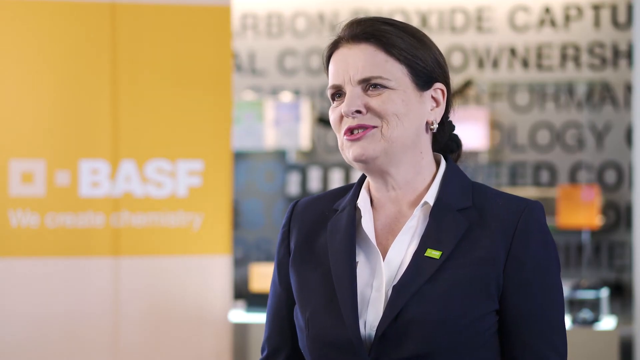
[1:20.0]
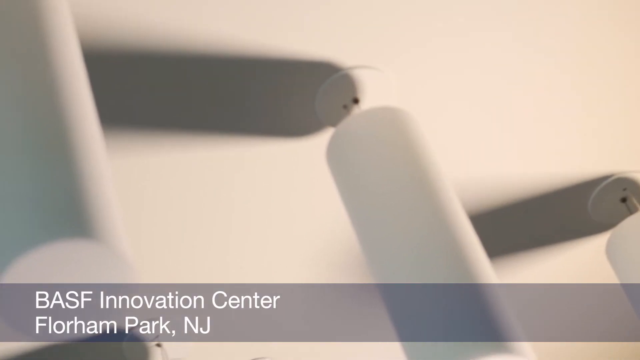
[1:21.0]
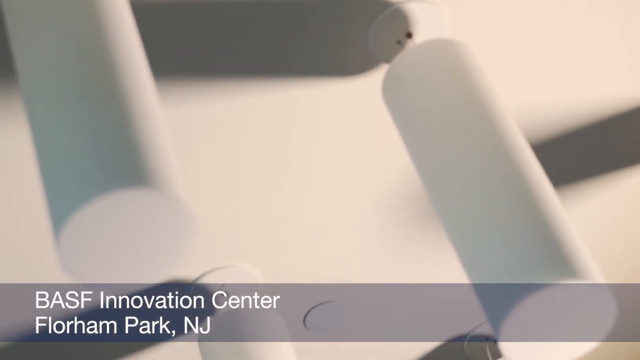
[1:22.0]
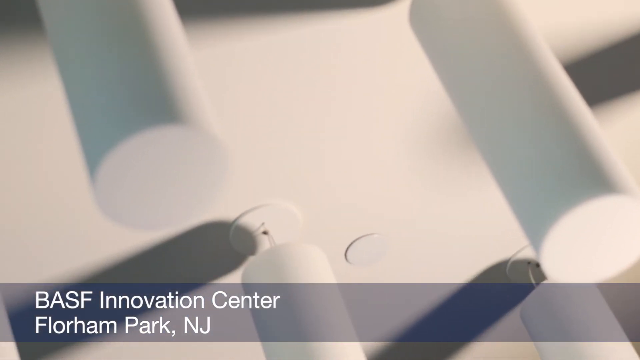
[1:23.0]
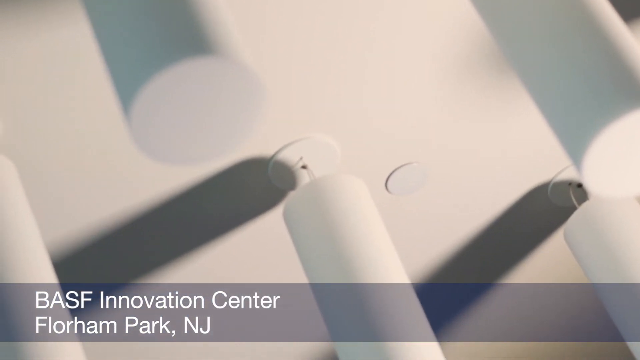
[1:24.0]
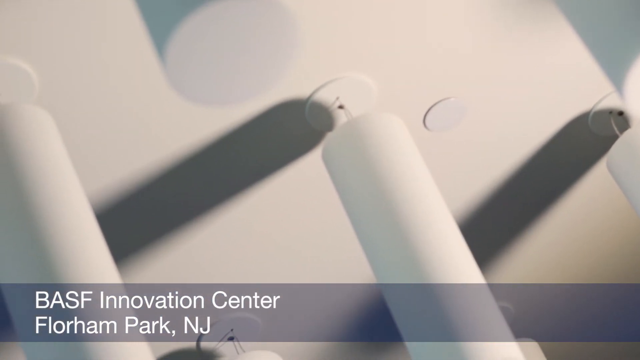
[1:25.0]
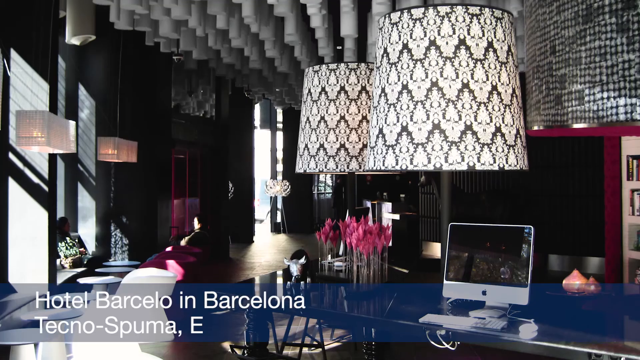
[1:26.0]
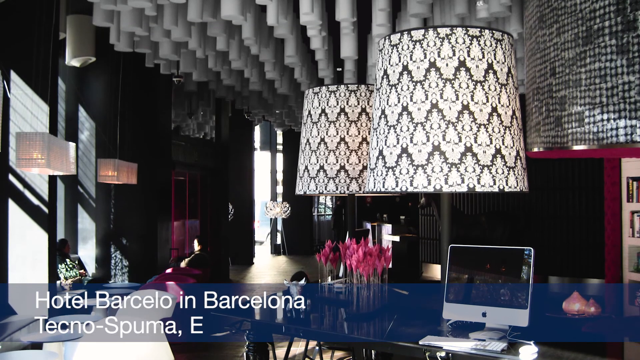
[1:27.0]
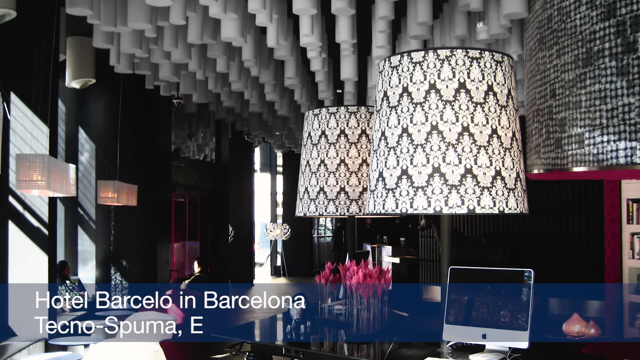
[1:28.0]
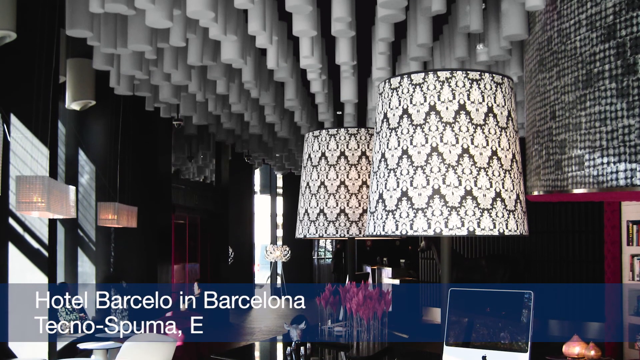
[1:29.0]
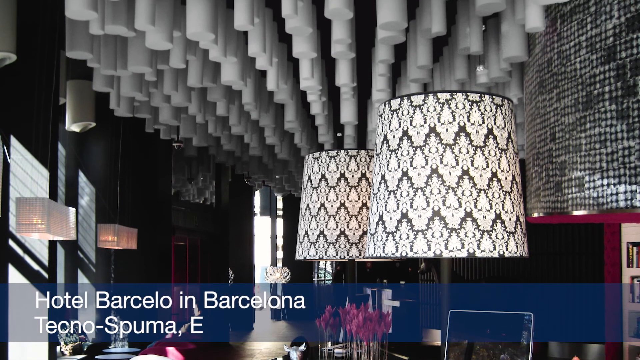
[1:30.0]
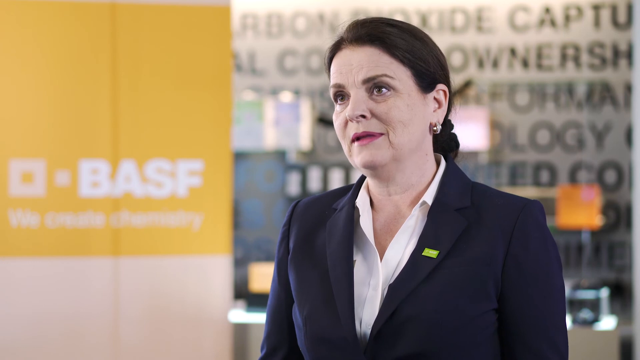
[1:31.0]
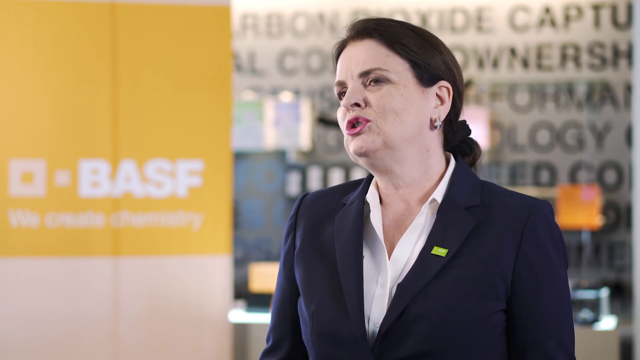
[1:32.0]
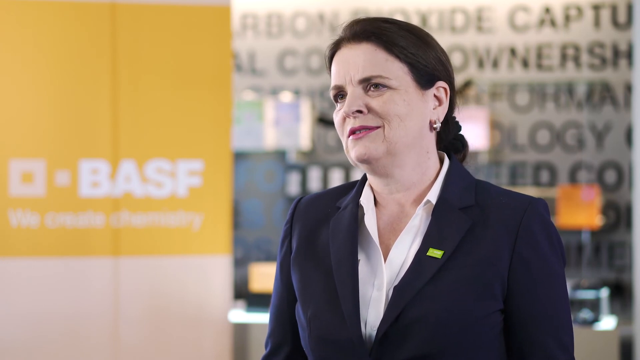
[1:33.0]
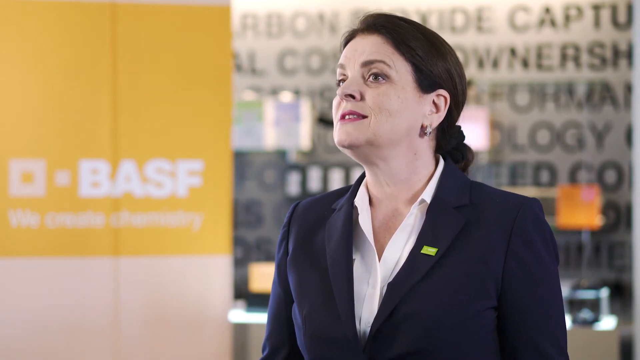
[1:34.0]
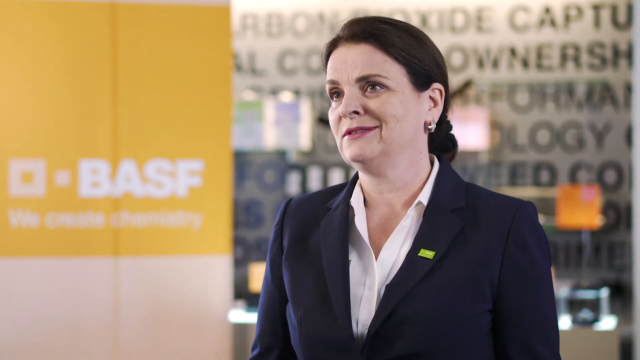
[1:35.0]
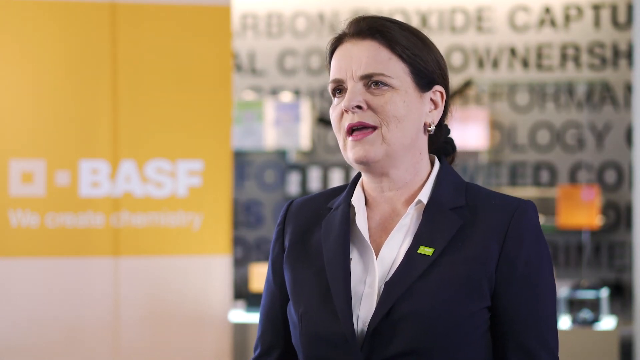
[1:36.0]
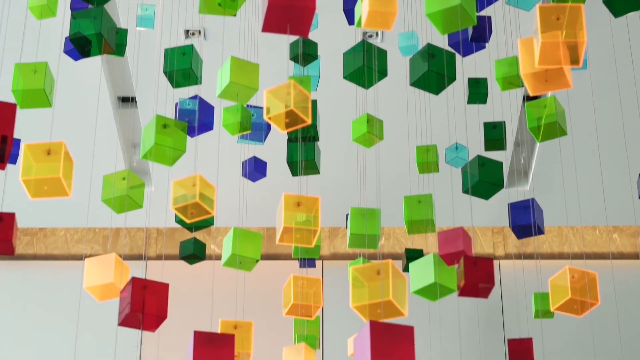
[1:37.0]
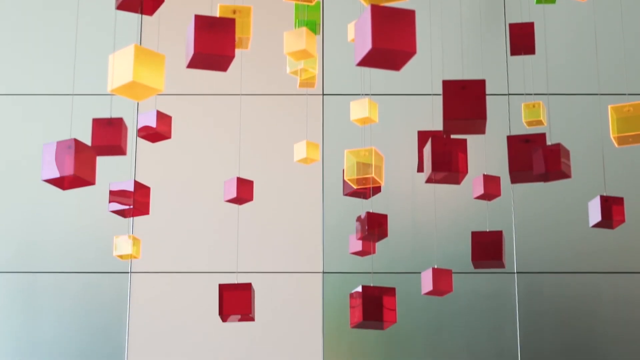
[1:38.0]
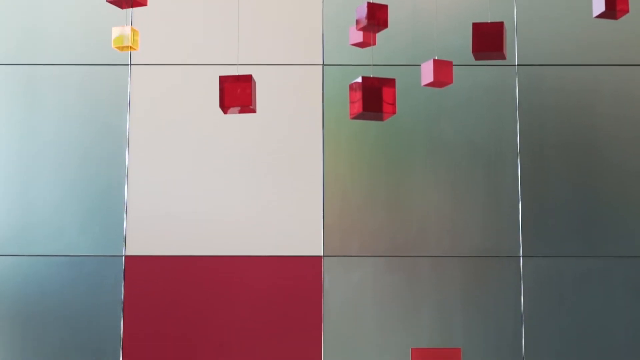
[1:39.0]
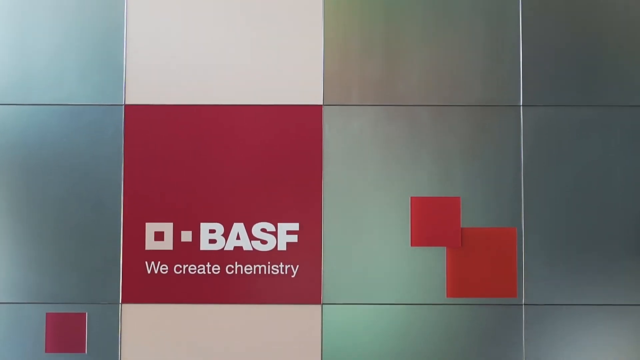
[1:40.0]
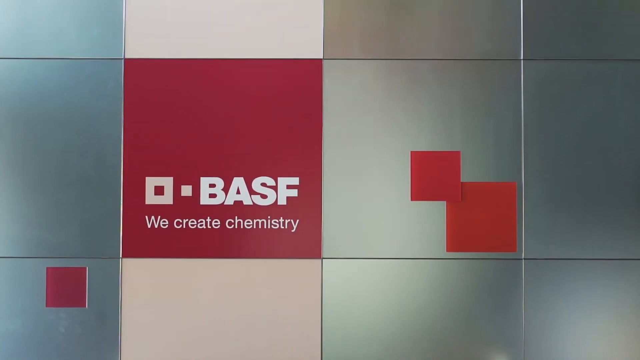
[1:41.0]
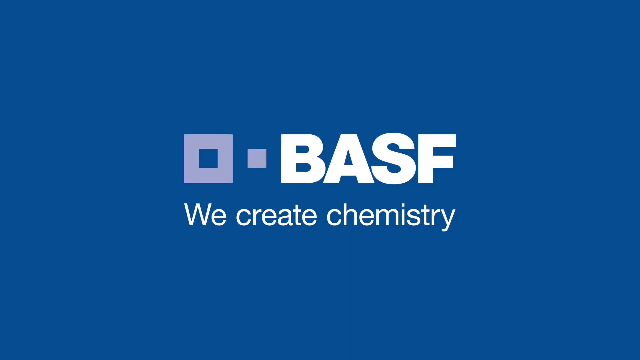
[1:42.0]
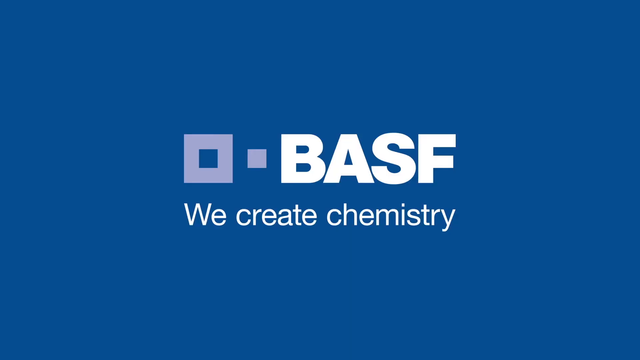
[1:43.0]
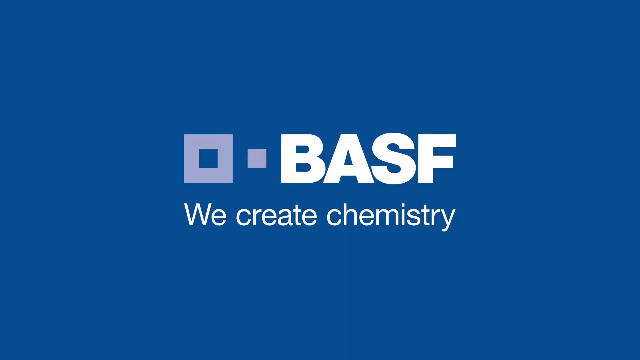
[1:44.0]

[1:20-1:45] A train station building with an intricately designed ceiling has many people going in and out. Doyle Robertson, a man in his 40s who seems to be talking about the company, is an expert on melamine foam in North America for BASF Corporation. The video shows the BASF building, which seems to have a lot of office space and looks gender diverse. A train passes by. Various ceilings with geometric patterns are shown, seemingly made by BASF Corporation, and the video states that various designs are also fire resistant. A woman named Teresa, who seems to also work for BASF Corporation, is seen talking. The company's foam helps reduce energy costs and increase daylight penetration. Other buildings whose ceilings the company made are shown.